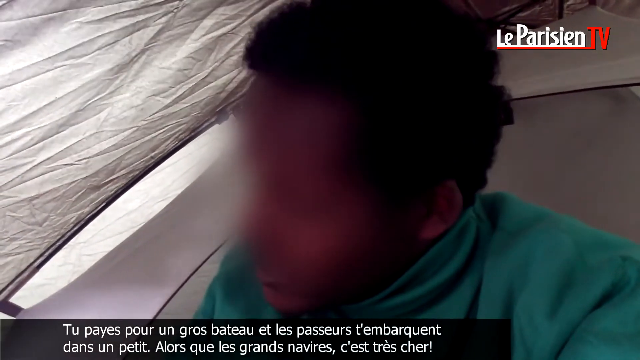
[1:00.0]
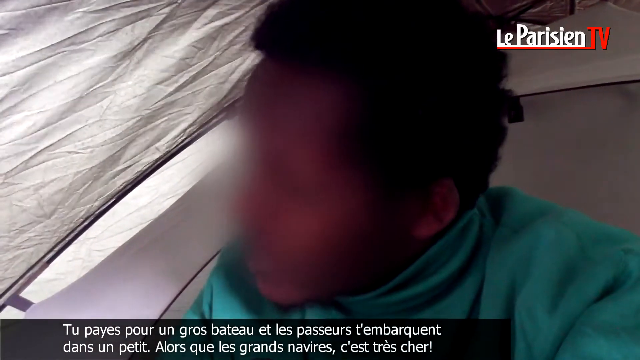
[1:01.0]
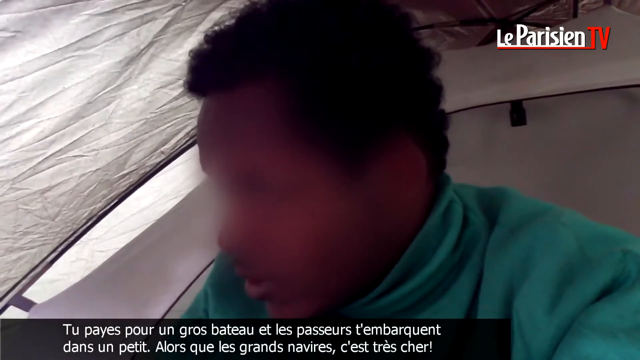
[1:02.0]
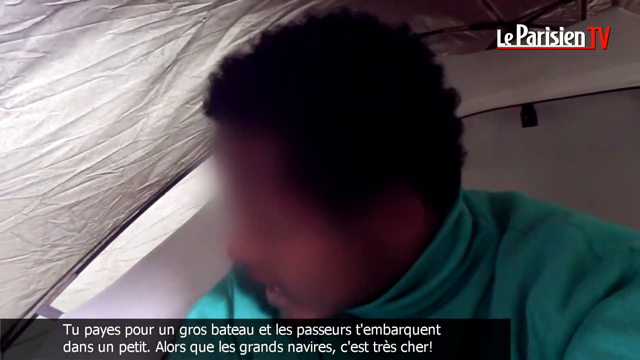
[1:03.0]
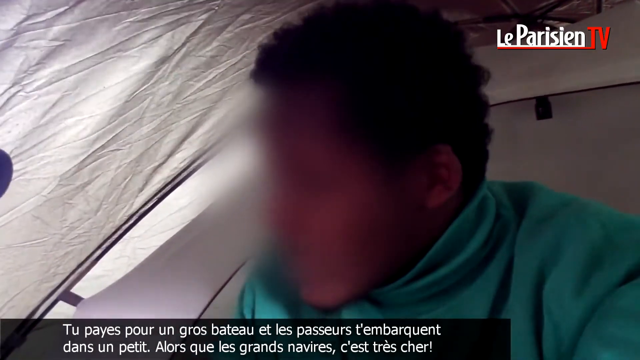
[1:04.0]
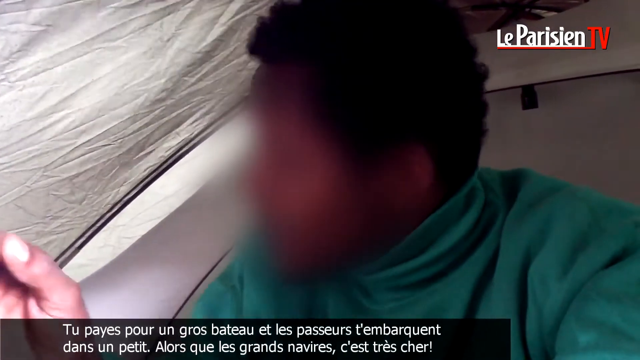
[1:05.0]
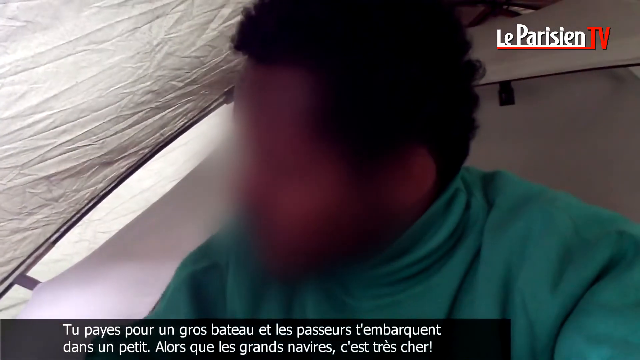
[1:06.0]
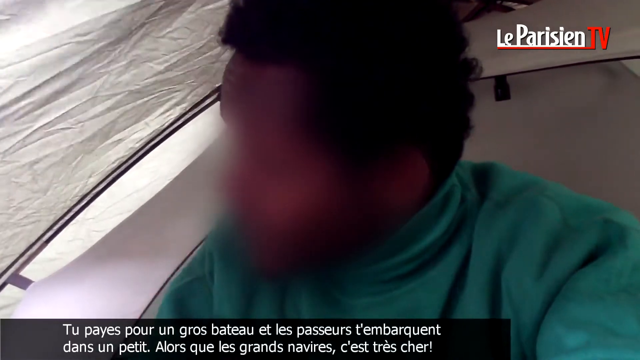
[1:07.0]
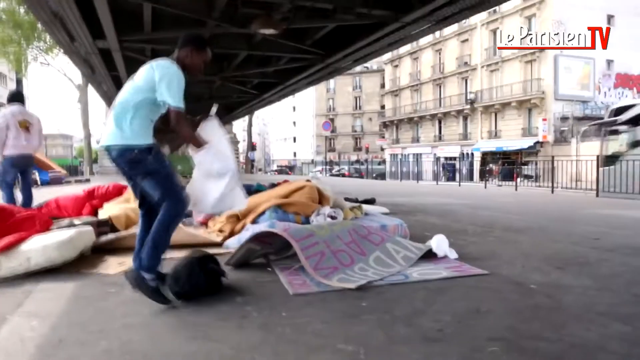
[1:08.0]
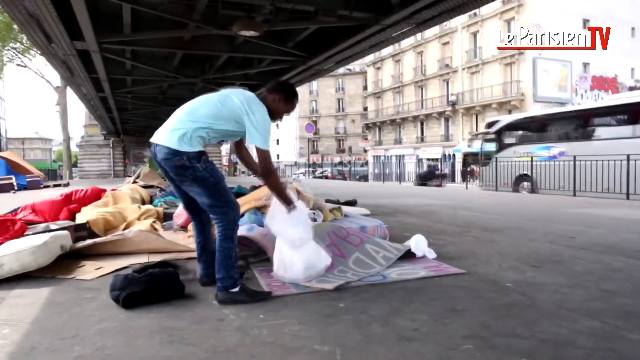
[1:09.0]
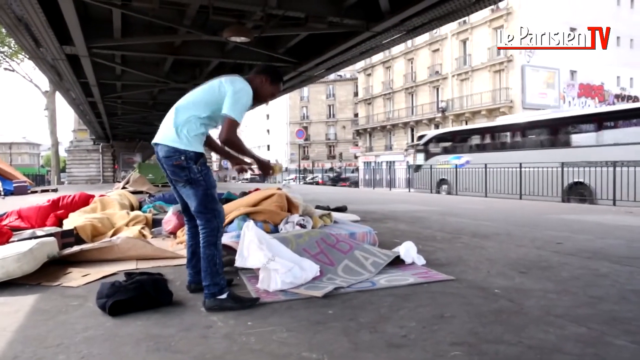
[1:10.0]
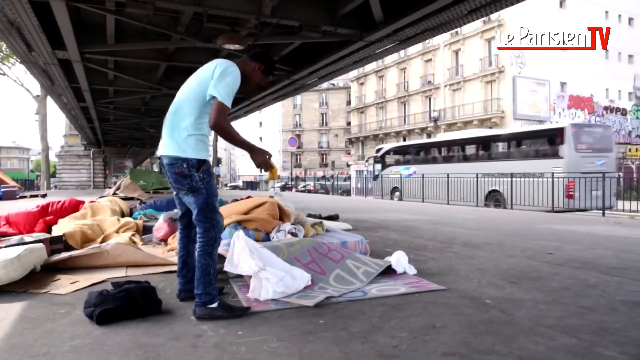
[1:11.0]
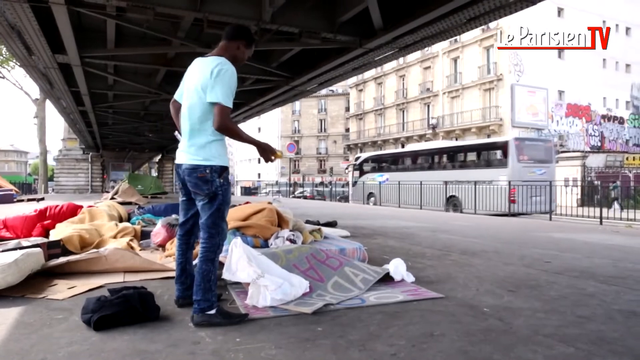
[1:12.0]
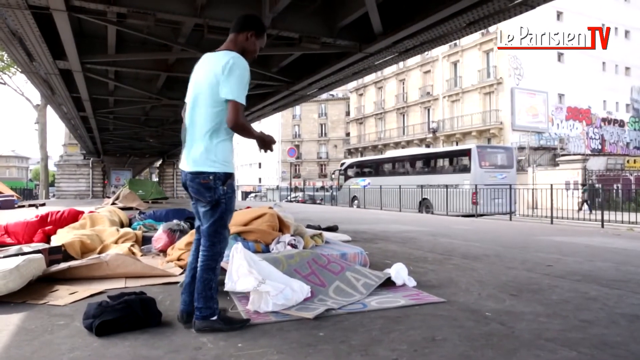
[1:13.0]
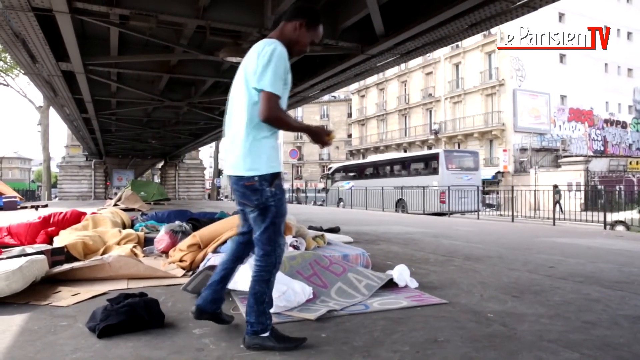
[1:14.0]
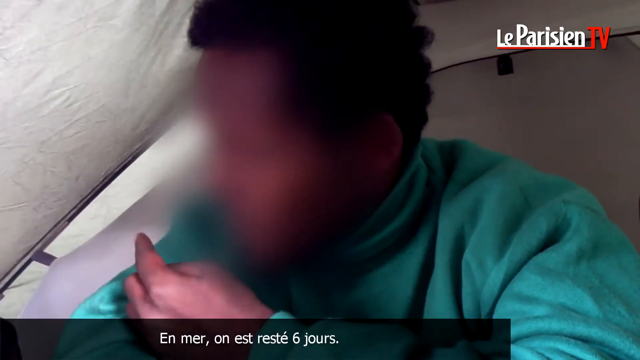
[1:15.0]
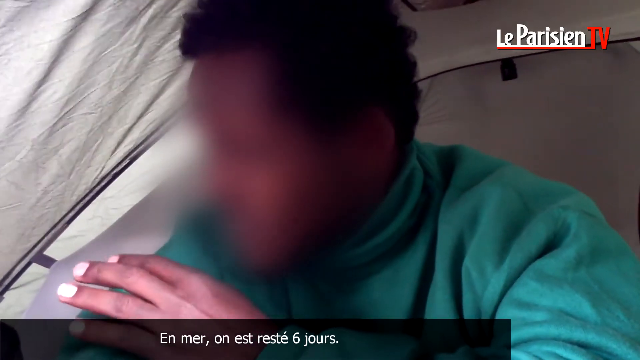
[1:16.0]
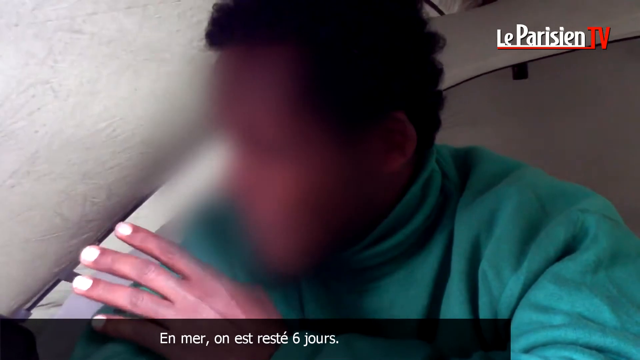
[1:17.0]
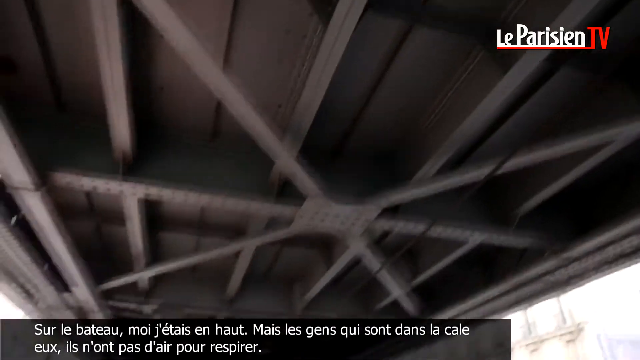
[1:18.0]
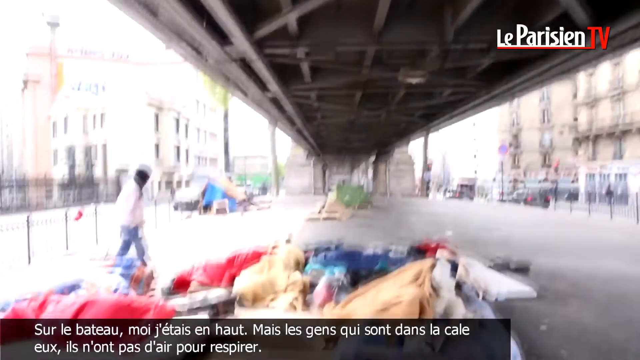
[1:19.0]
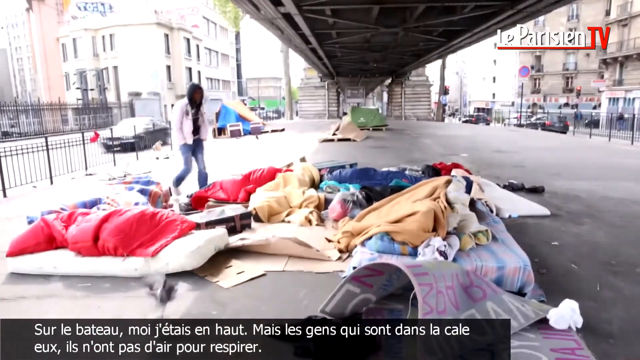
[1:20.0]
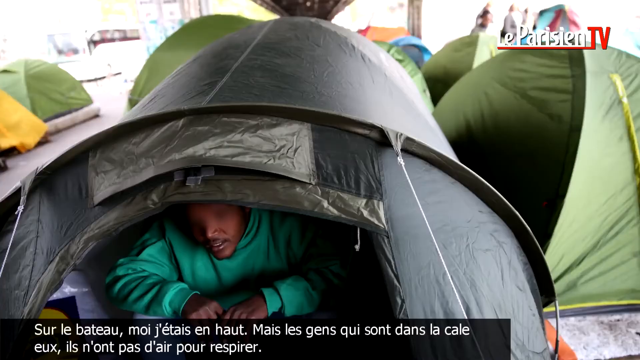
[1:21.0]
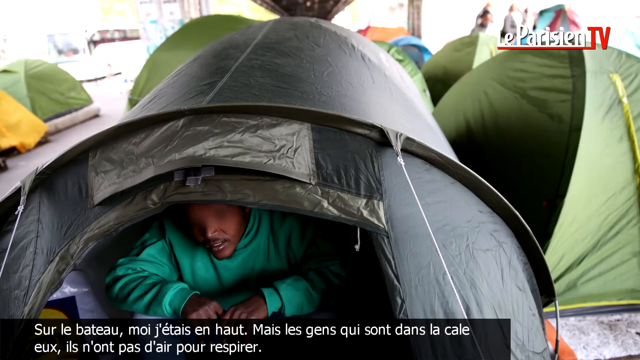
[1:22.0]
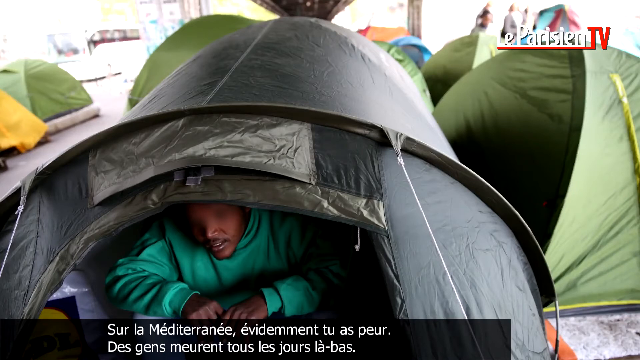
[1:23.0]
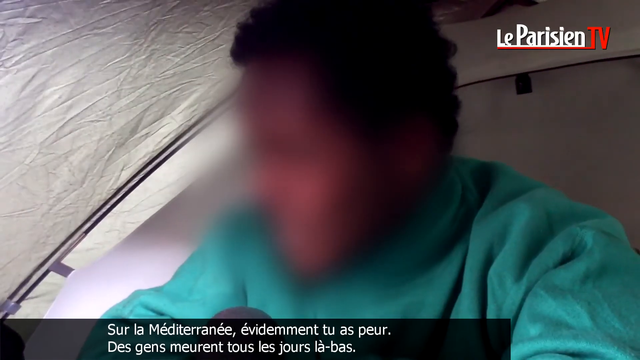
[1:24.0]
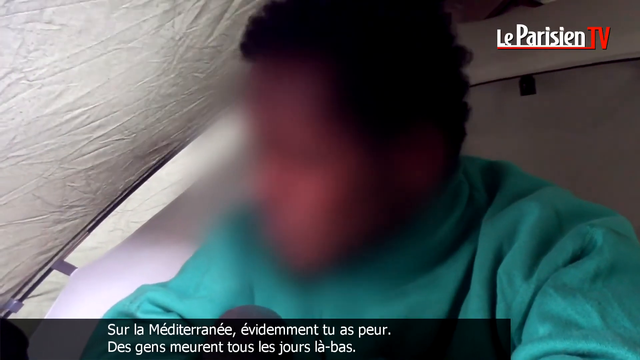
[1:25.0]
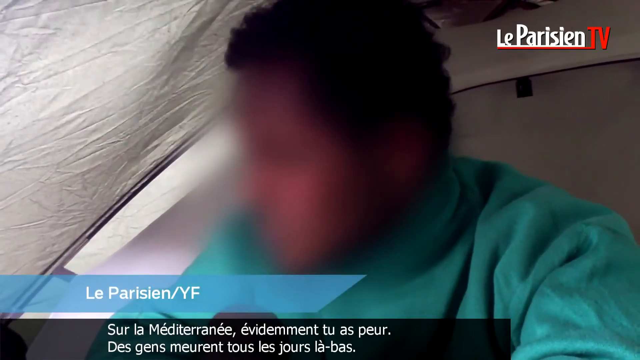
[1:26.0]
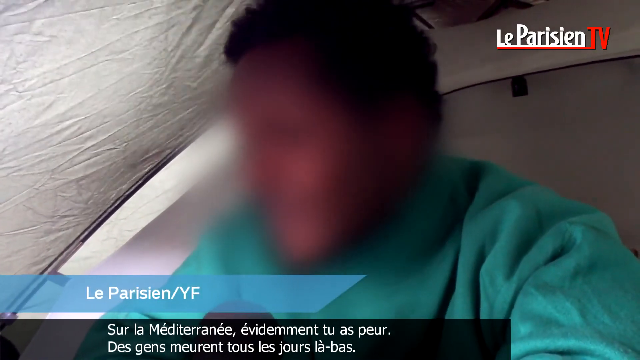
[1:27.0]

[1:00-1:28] The video goes back to the man in his tent with his face blurred out. At the very bottom, text in a different language appears in a black box. He continues pointing around. The scene changes to another African-American person in a teal, bluish shirt walking around a lot of blankets and tents on the floor while it is windy and the fabric pieces flap all over the place. The next scene shows the top of the structure they are under: the grids, how the architecture is laid out, the bolts in the metal and the stainless seams right above them. The camera then pans down to yellow, green, red and white items, mattresses on the floor, and bags, with a person walking over them looking all around. The next scene is a picture of a person sitting and sleeping in their tent. The video then returns to the man, and "Le Parisien / YF" appears at the end.